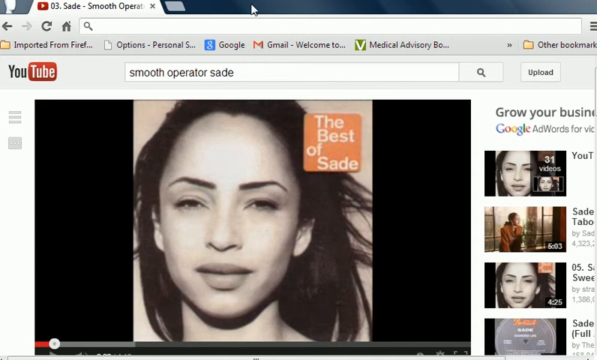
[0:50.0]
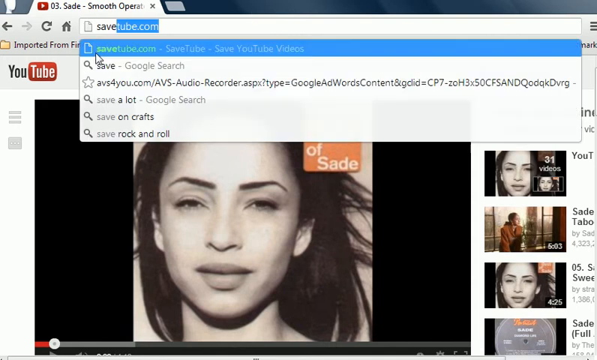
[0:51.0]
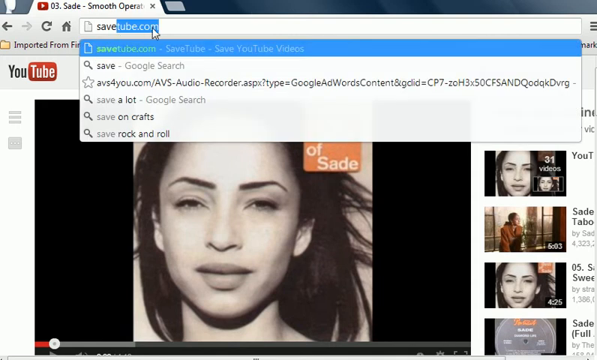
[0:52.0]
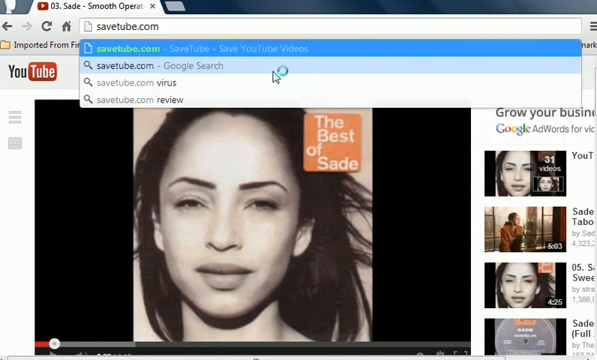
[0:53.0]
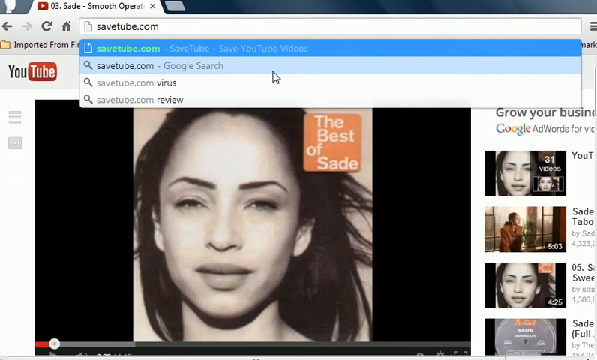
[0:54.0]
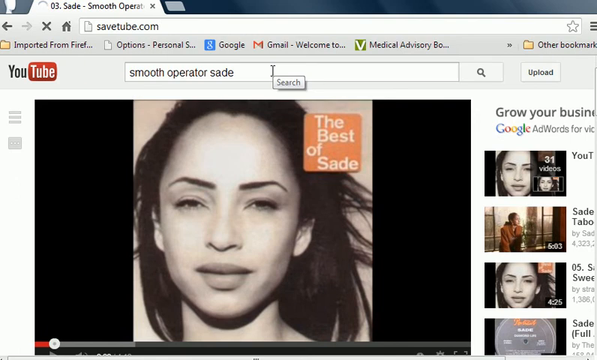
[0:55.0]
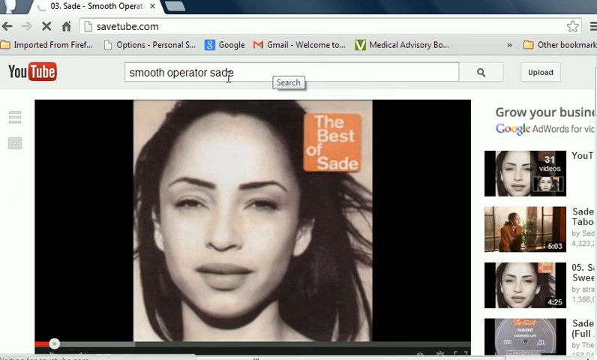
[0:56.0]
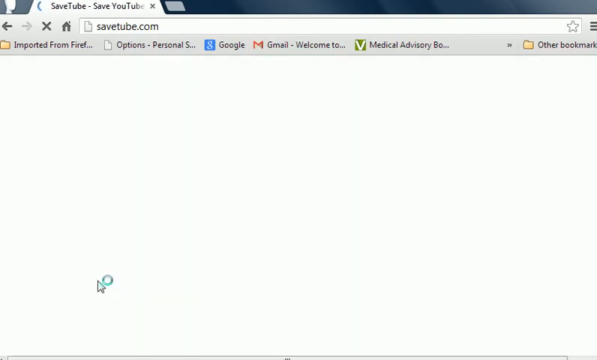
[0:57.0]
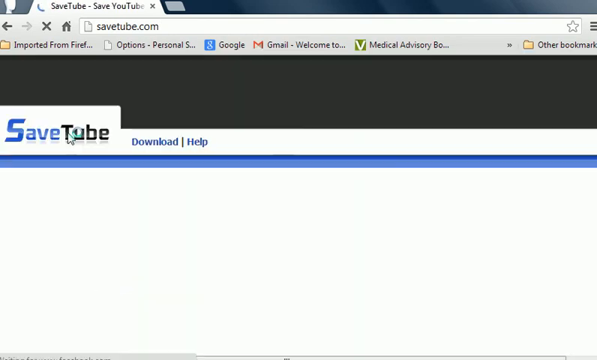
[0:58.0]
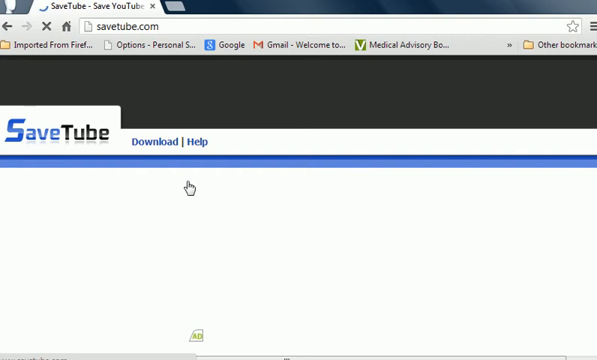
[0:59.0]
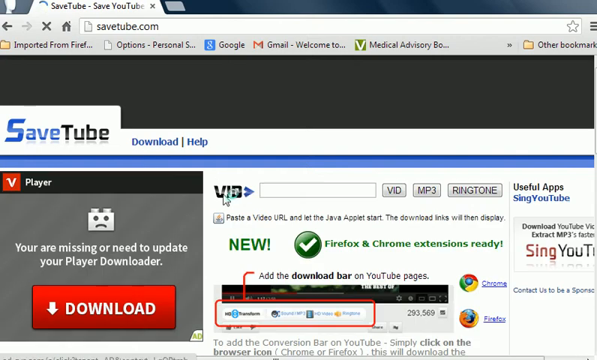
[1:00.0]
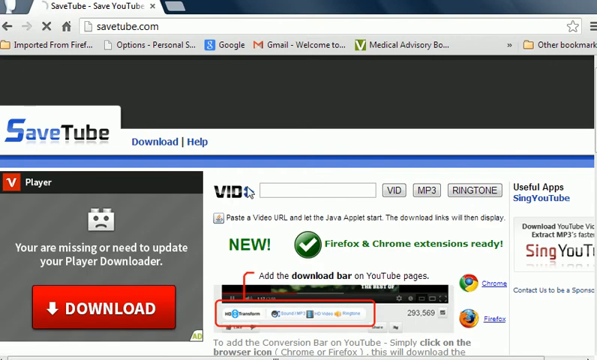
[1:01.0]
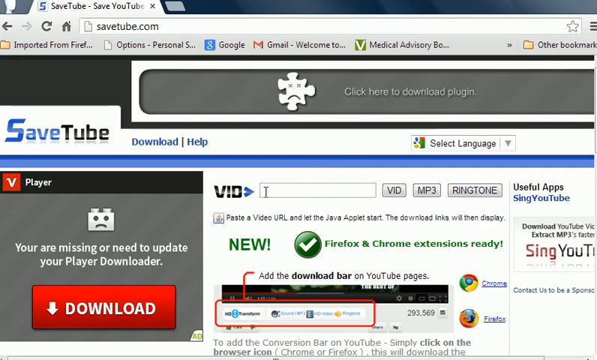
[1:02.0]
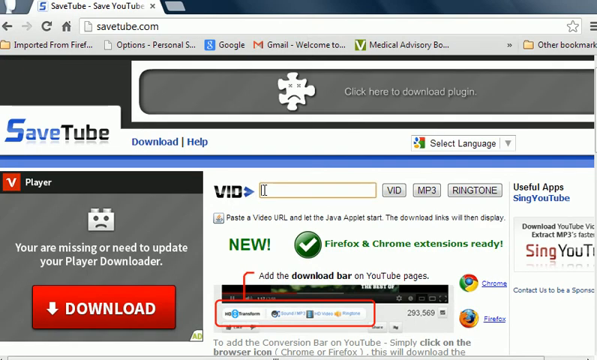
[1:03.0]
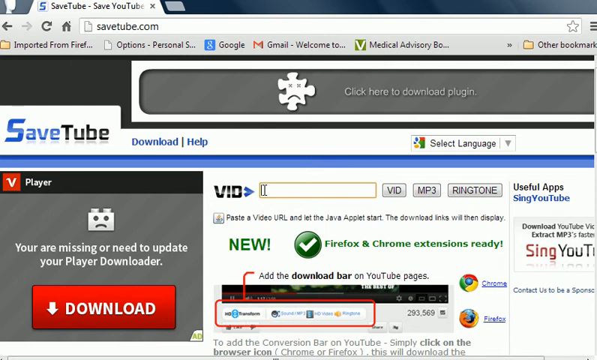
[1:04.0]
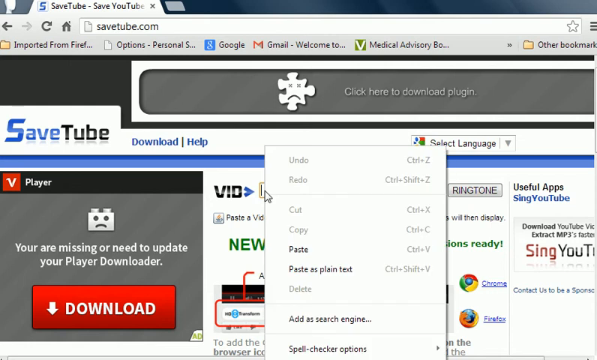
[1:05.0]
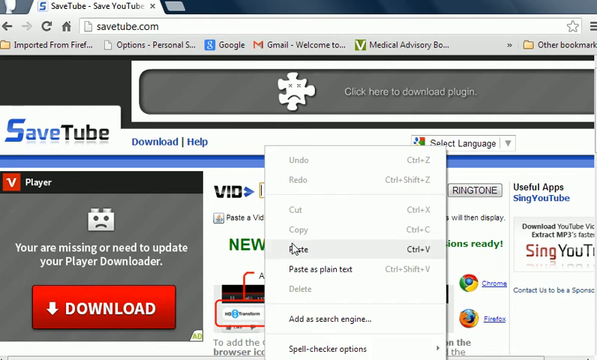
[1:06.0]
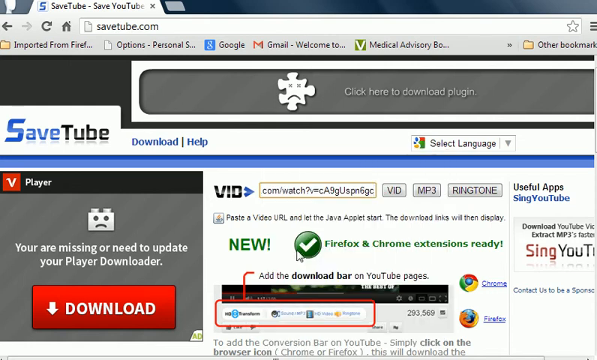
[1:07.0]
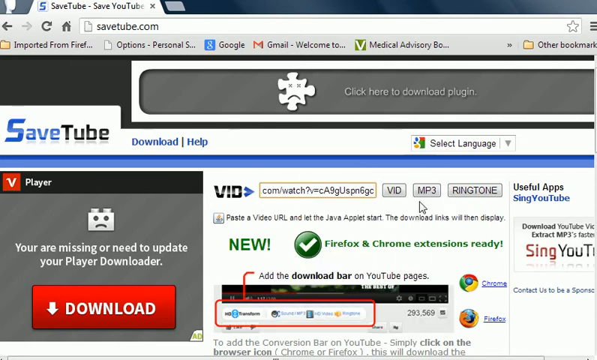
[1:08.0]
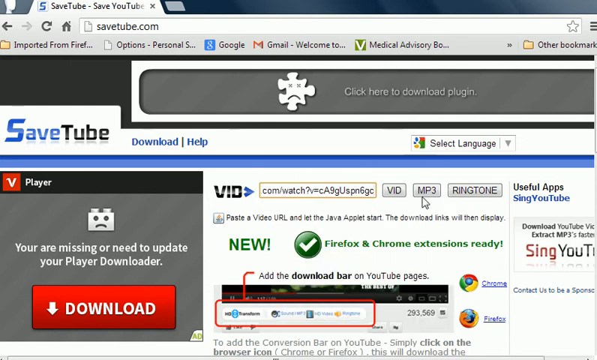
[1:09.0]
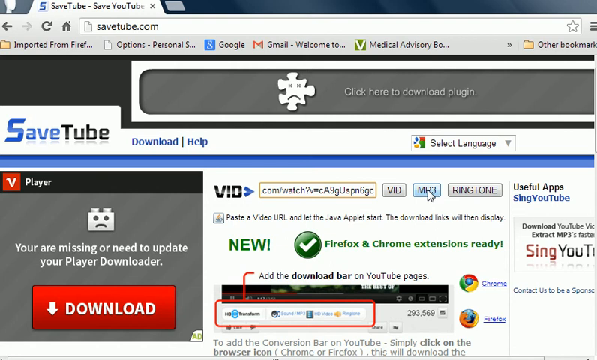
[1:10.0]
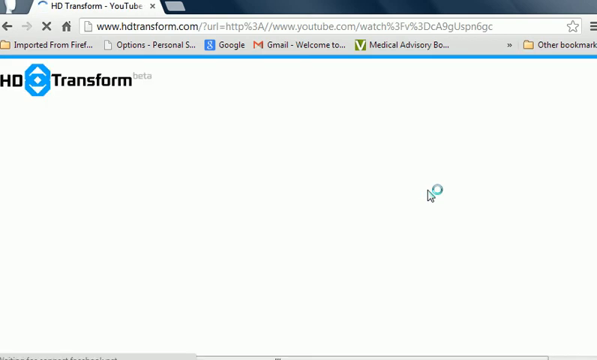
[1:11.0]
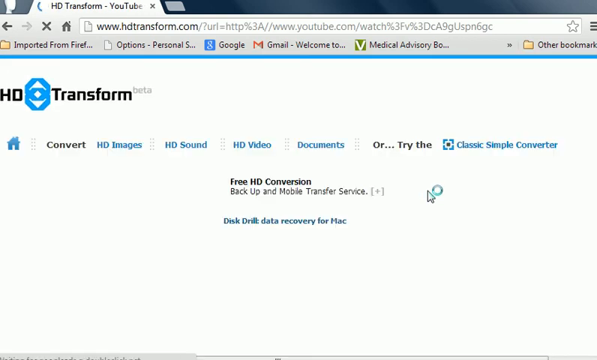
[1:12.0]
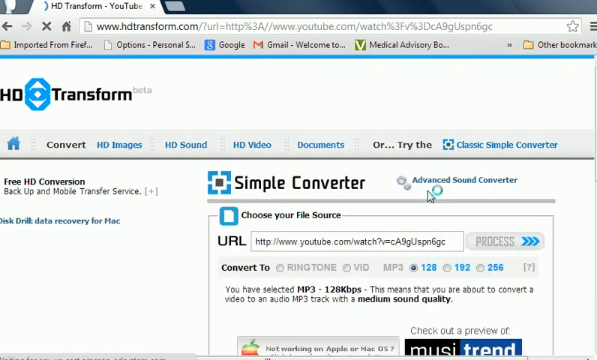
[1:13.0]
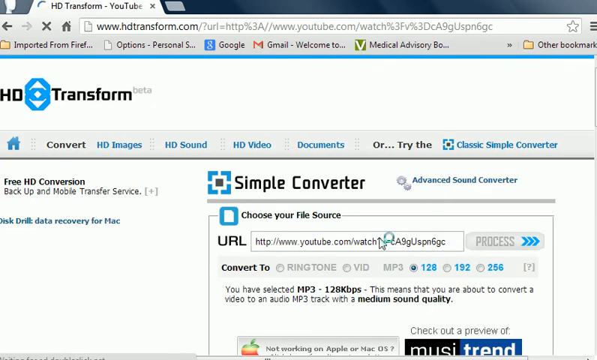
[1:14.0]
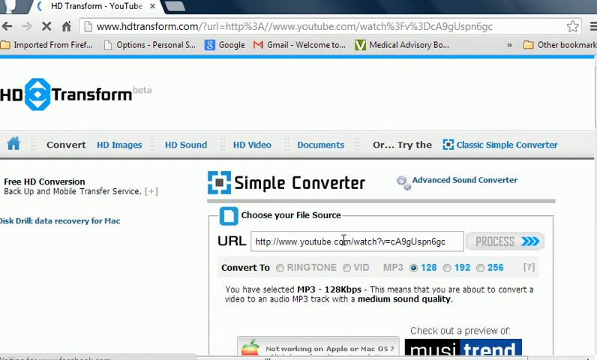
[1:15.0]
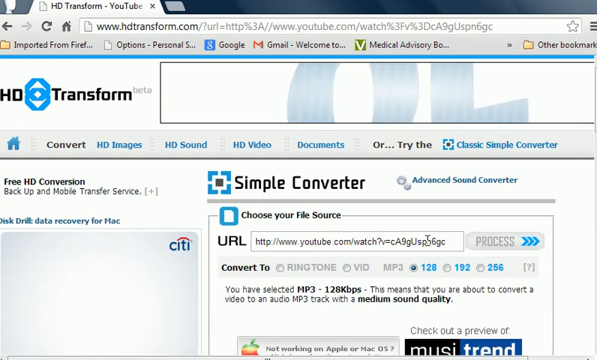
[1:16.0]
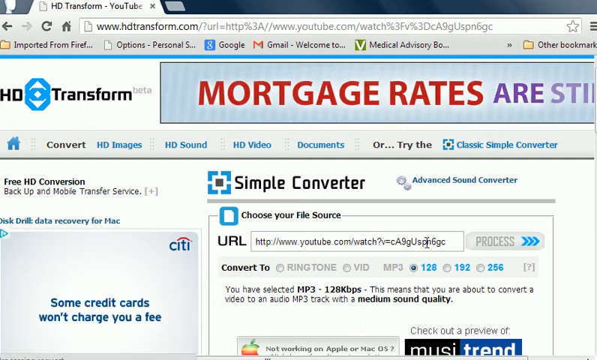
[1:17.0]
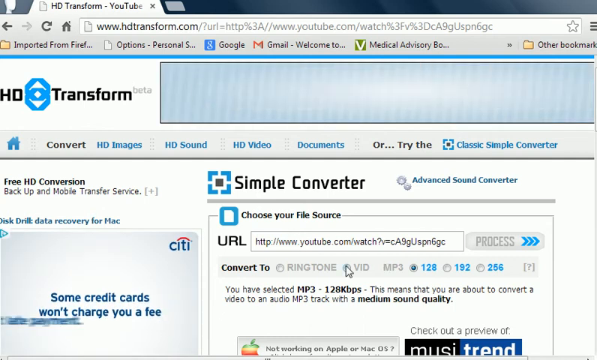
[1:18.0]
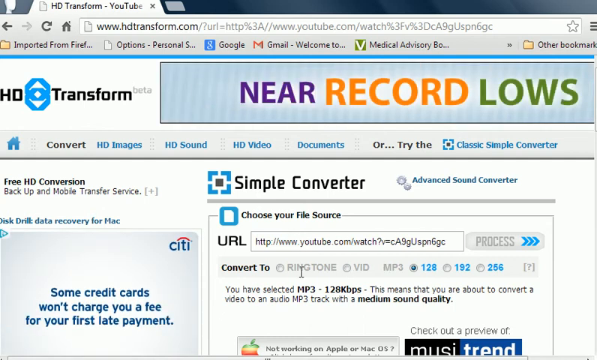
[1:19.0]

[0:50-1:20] "save" is entered into the search bar, and the autocomplete suggests "savetube.com," with "tube.com" highlighted in blue. Several search suggestions appear in a drop-down list. The first, highlighted in blue, reads "savetube.com SaveTube Save YouTube Videos," and the second is "save Google Search." The mouse hovers over the second option. The view cuts to the SaveTube website, where the mouse hovers over the SaveTube logo, then indicates an input text box to the right of the text "VID" and a greater-than sign. The mouse clicks in the input box, right-clicks, and selects "Paste" from the menu, and the copied URL appears in the text box. The mouse hovers over the buttons to the right of the text box and clicks the second, middle button, "MP3." The view cuts to the website HDTransform, where the URL populates a text box to the right of the text "URL." The mouse indicates this URL and selects the "128" radio button in the "Convert To" radio button group.